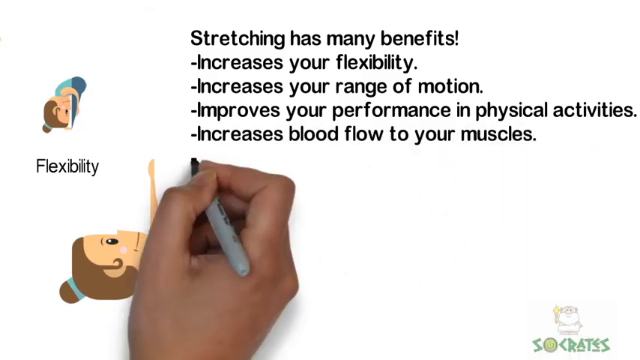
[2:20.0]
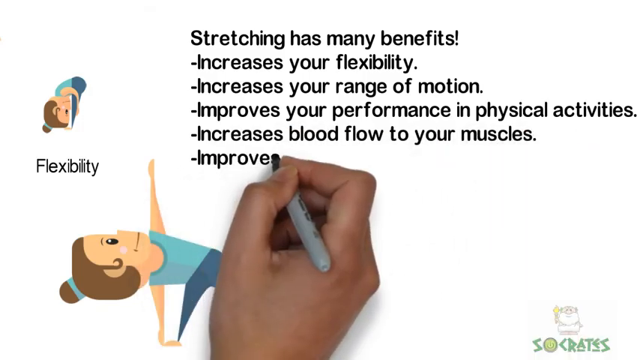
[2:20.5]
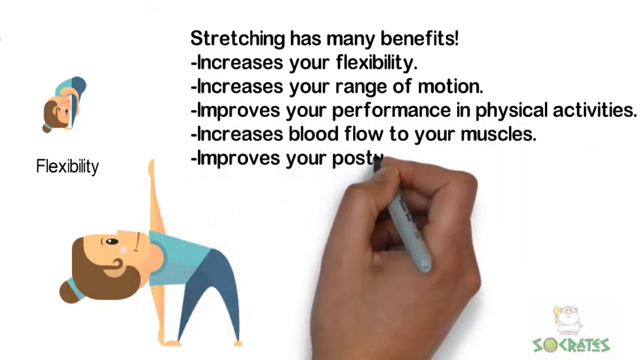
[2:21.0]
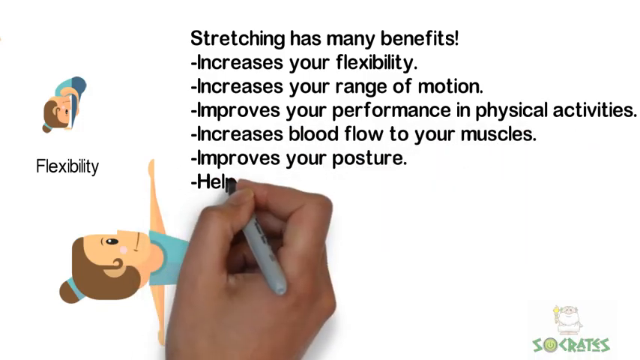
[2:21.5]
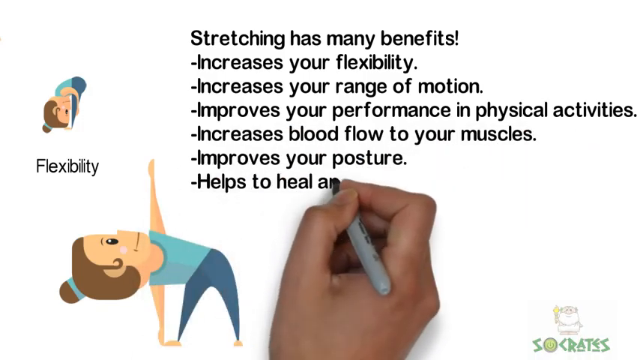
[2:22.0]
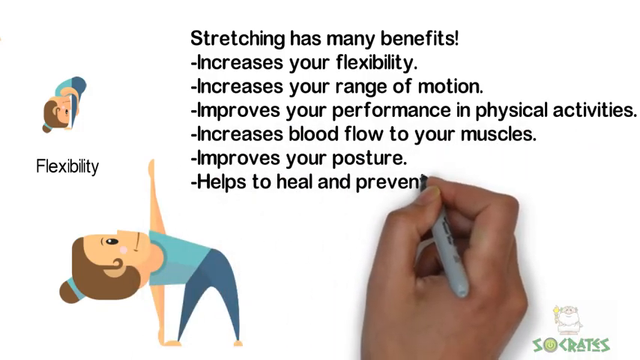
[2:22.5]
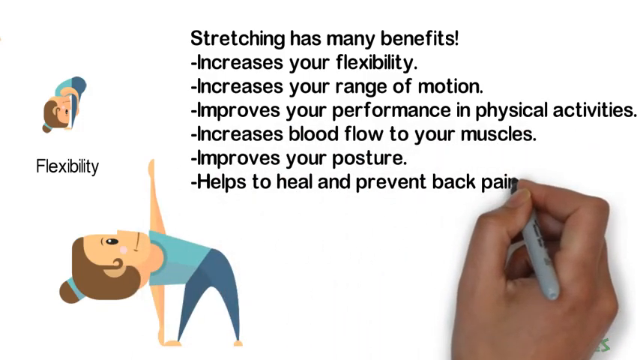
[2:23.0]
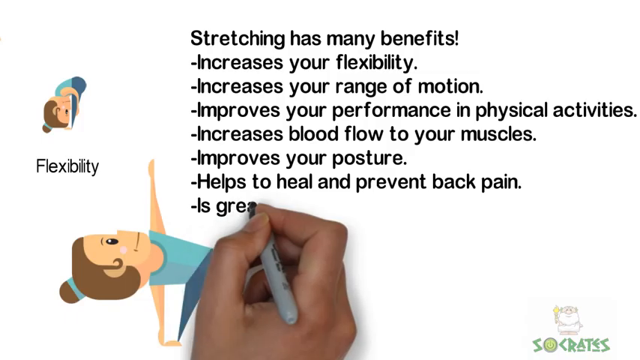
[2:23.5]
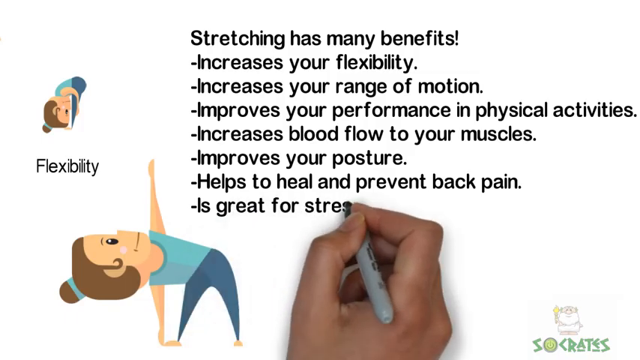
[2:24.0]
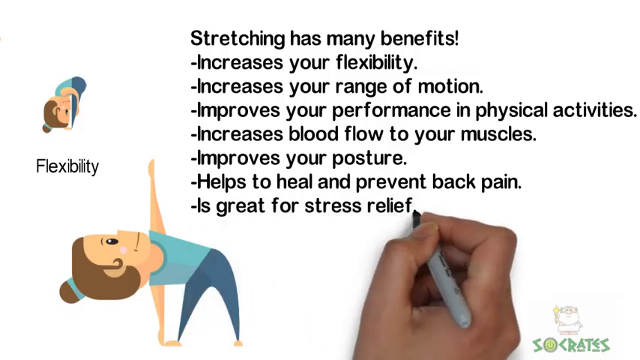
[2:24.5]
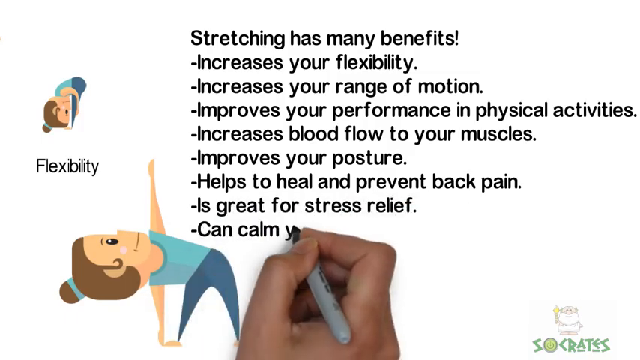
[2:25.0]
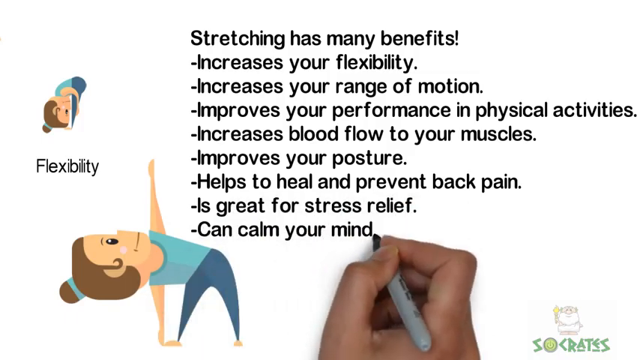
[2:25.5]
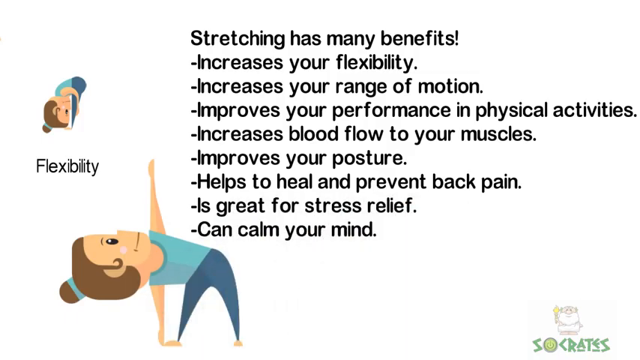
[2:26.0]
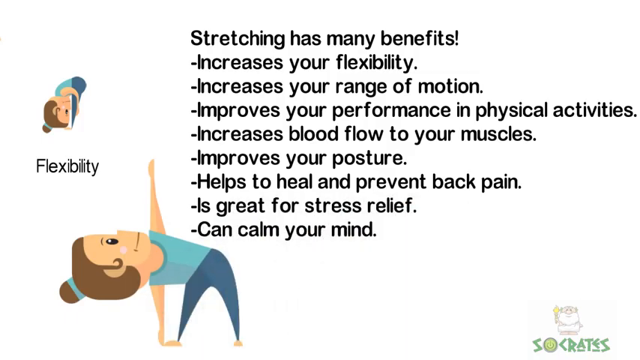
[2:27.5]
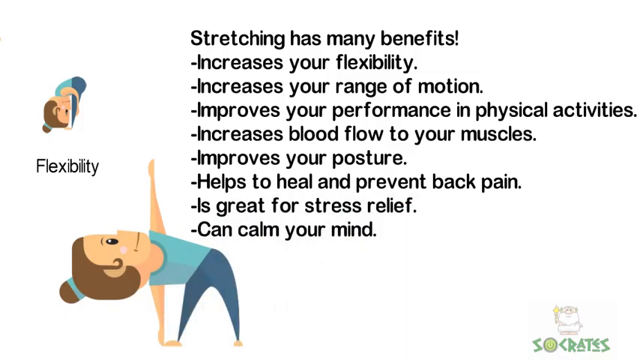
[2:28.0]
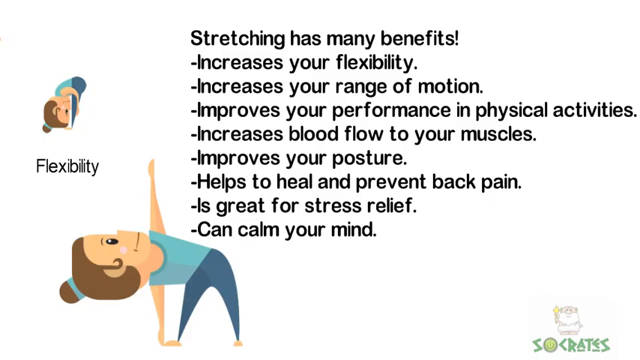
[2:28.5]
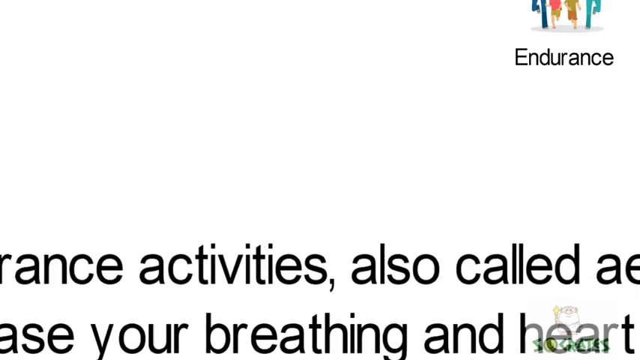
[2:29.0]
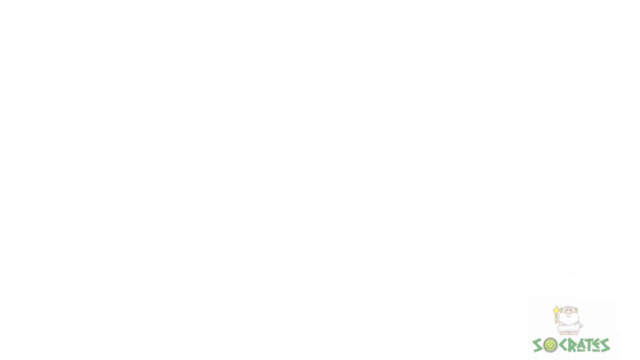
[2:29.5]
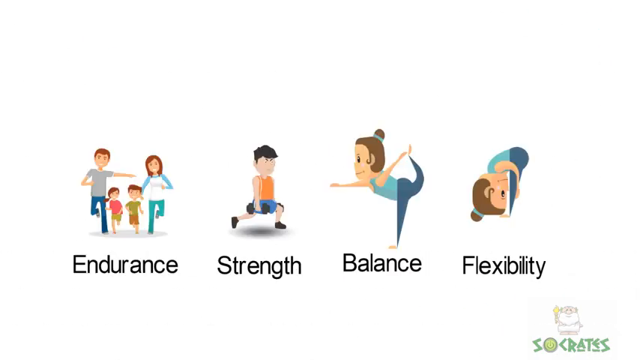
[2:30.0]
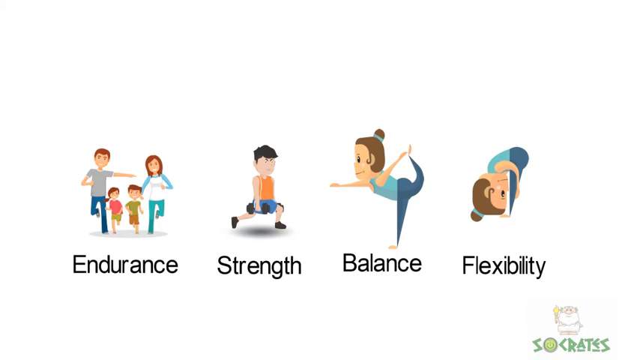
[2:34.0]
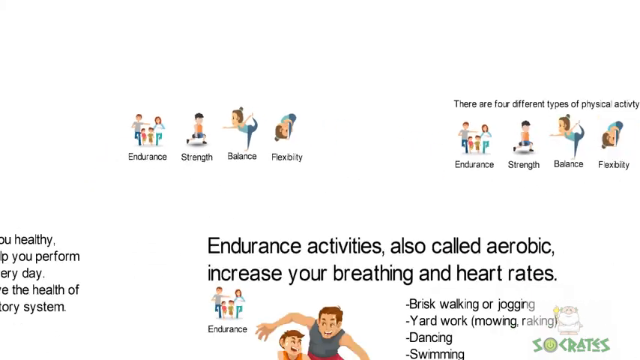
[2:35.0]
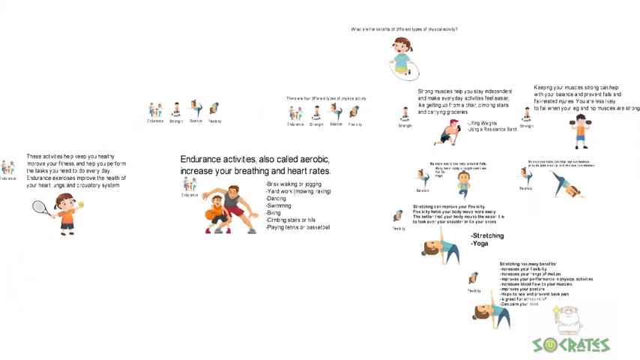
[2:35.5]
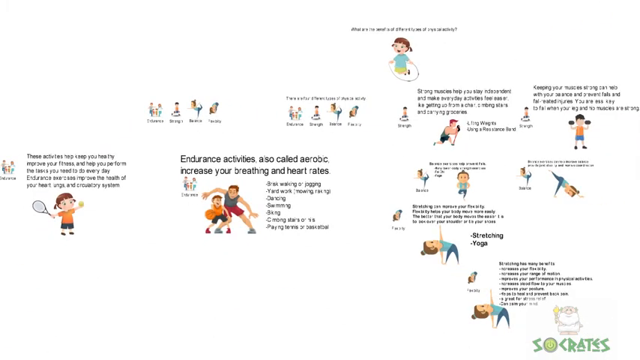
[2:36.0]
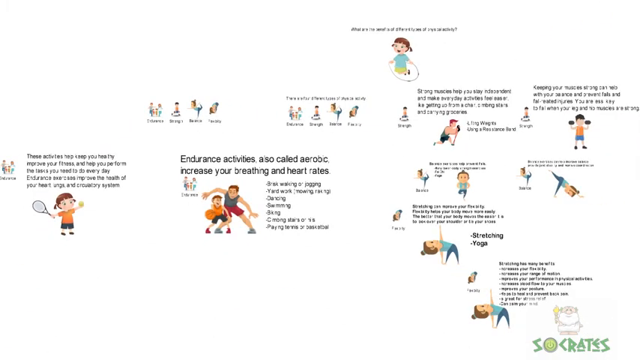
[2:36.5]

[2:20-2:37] The top of the white screen shows black text about stretching: "stretching has many benefits increases your flexibility increases your range of motion improves your performance of physical activities increases blood flow to your muscles." A hand holding a gray marker with a black tip continues writing in black: "improves your posture," "helps to heal and prevent back pain," "is great for stress relief," "can calm your mind." Everything disappears, and on the left side of the white screen is the word "endurance" in black, with a cartoon family above it: a dad, a mom and two kids between them. To the right is the word "strength," with a cartoon boy above it in an orange tank top and blue shorts, leaning down with barbells in his hands. To the right of that is the word "balance," with a cartoon woman above it in green stretch pants and a turquoise tank top, holding her leg up behind her. Further right is the word "flexibility," with a cartoon woman above it in green pants and a turquoise tank top, leaning forward and grabbing her legs.